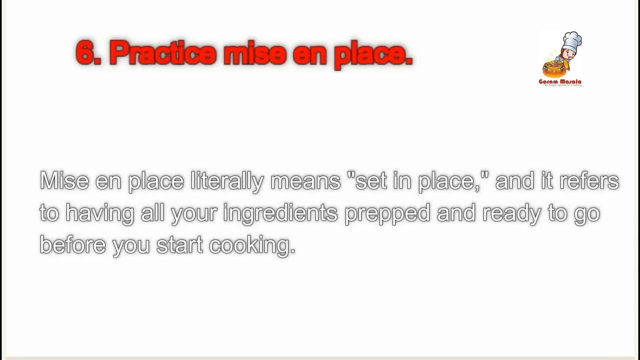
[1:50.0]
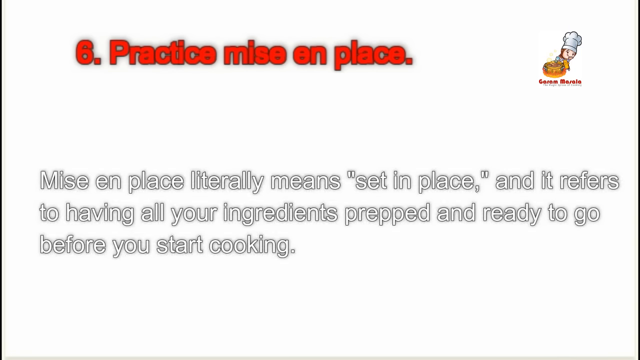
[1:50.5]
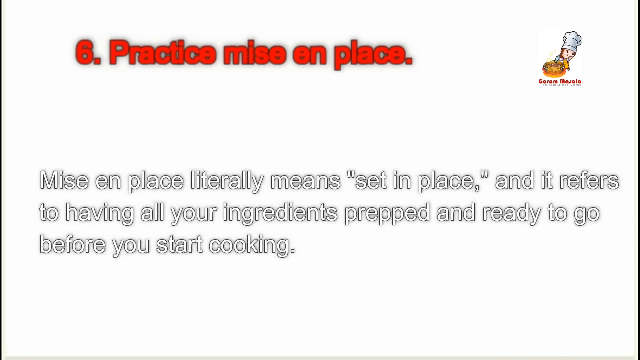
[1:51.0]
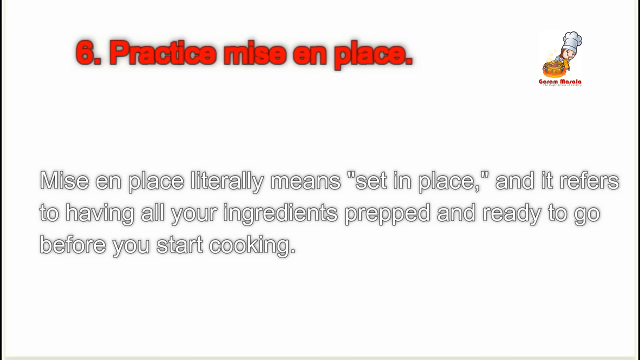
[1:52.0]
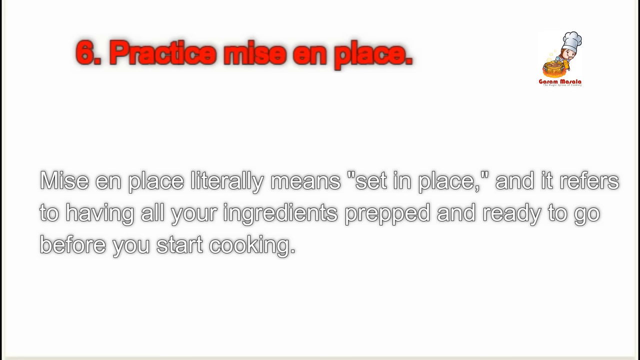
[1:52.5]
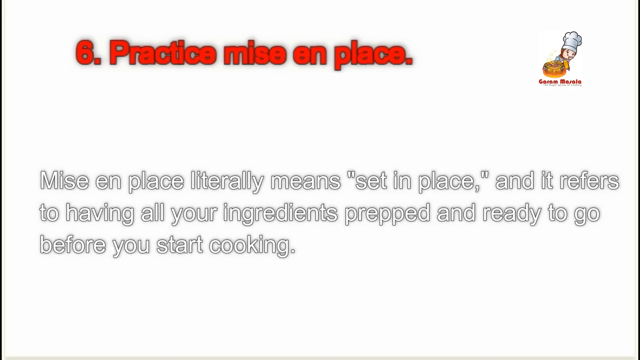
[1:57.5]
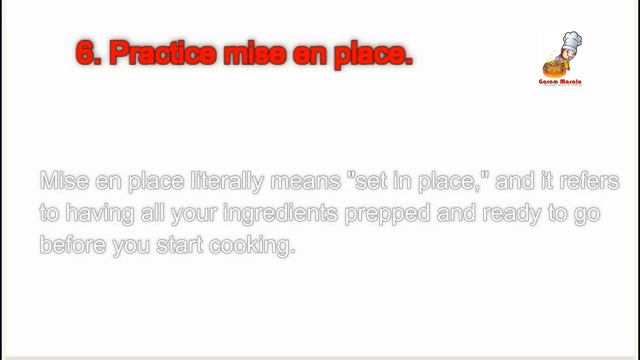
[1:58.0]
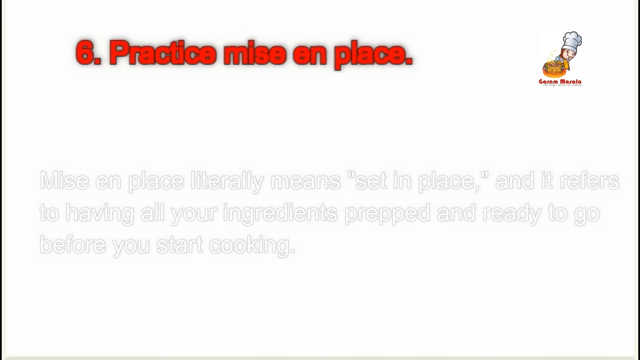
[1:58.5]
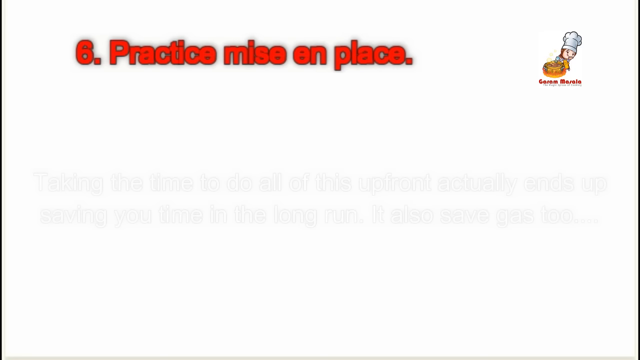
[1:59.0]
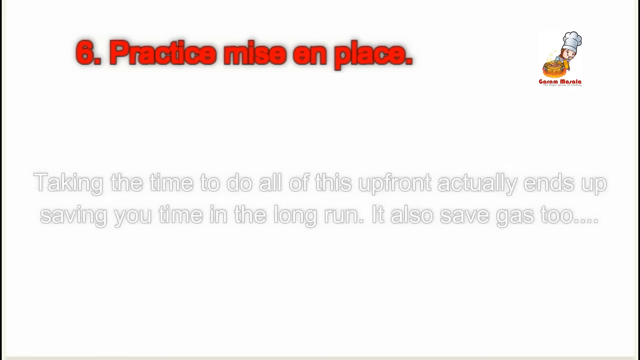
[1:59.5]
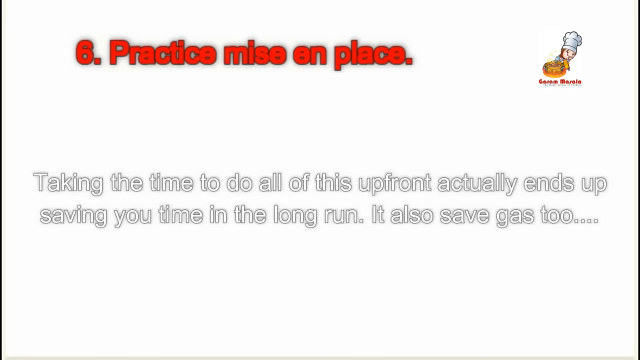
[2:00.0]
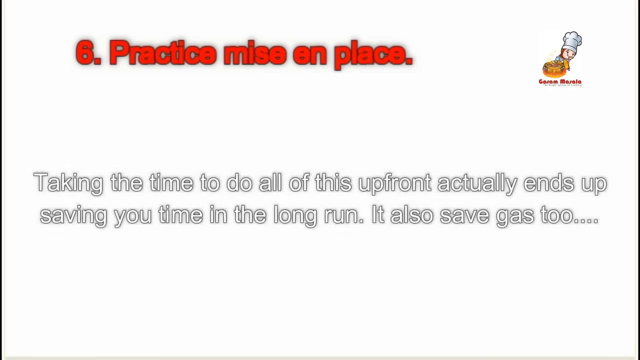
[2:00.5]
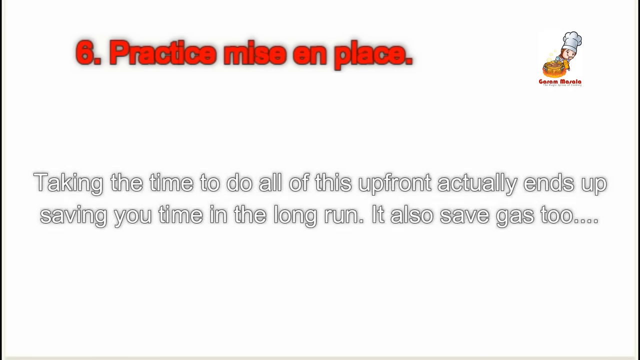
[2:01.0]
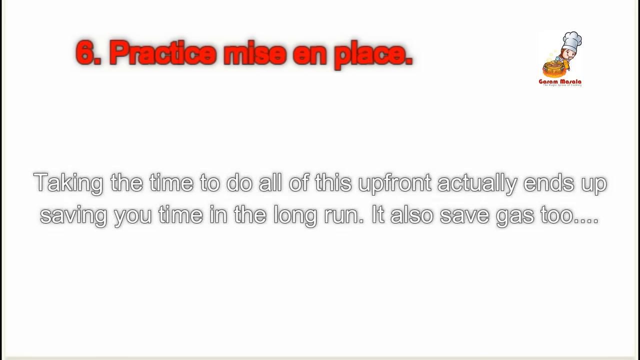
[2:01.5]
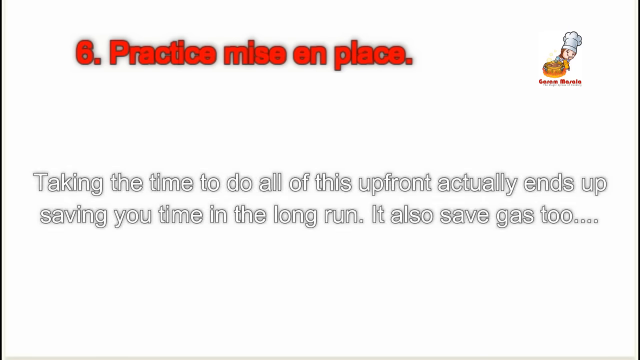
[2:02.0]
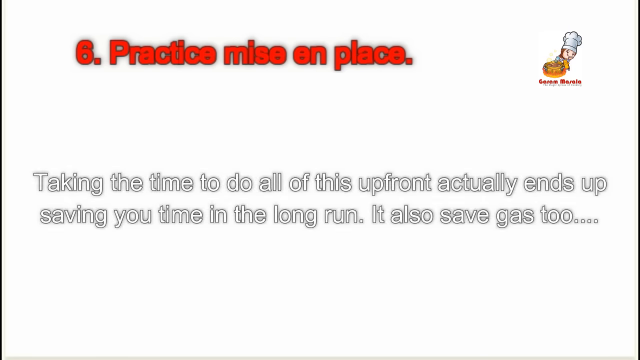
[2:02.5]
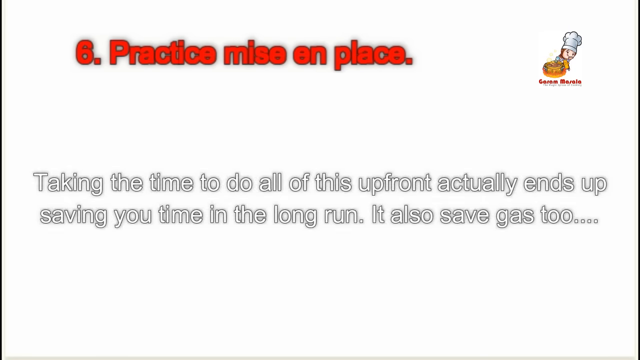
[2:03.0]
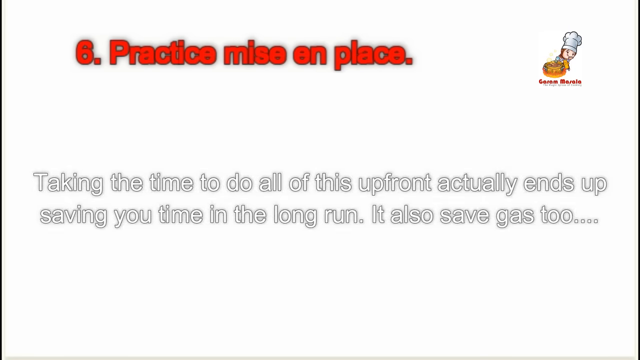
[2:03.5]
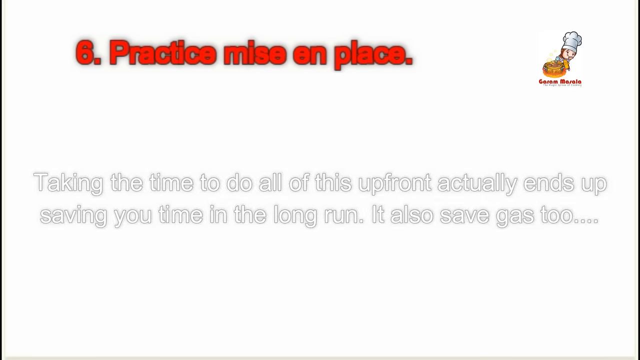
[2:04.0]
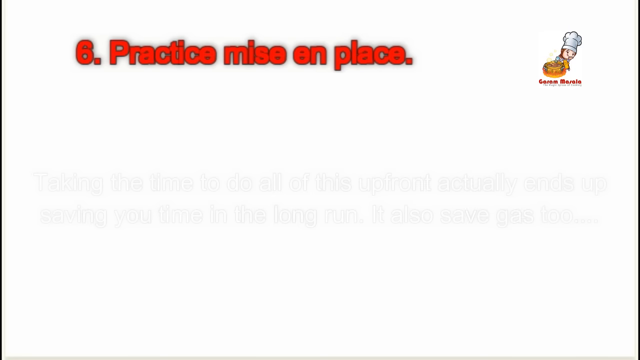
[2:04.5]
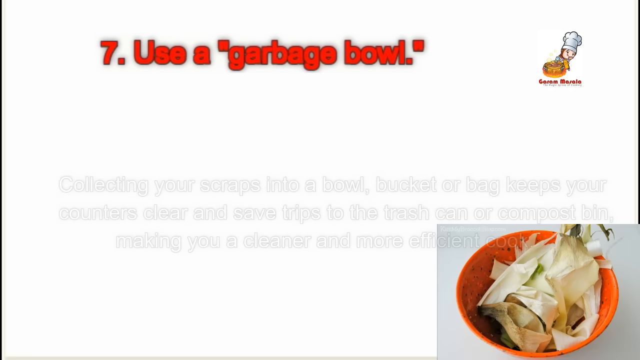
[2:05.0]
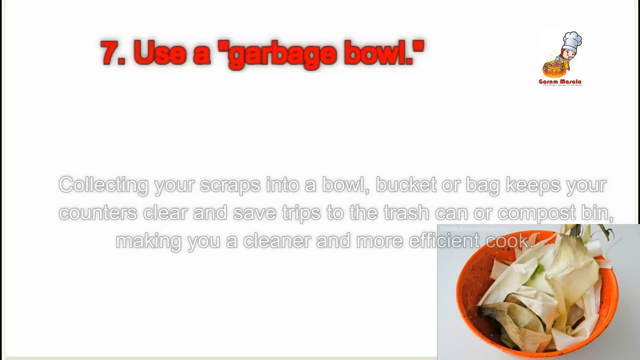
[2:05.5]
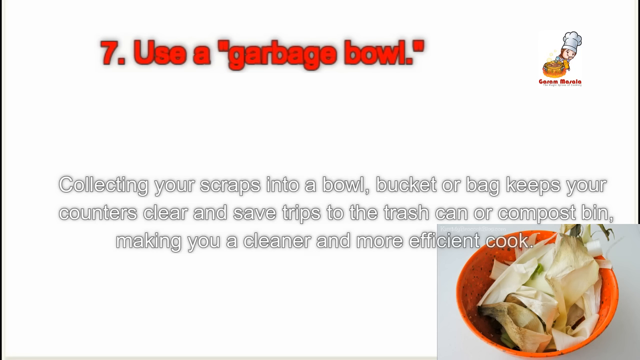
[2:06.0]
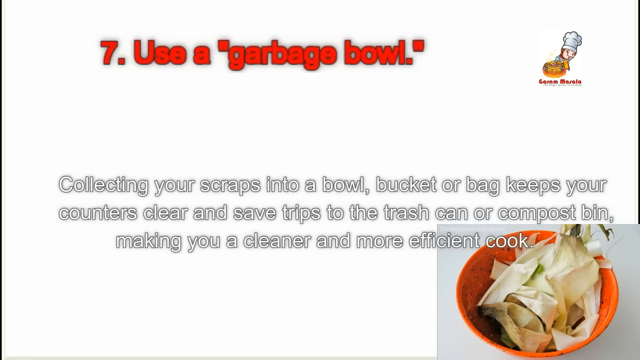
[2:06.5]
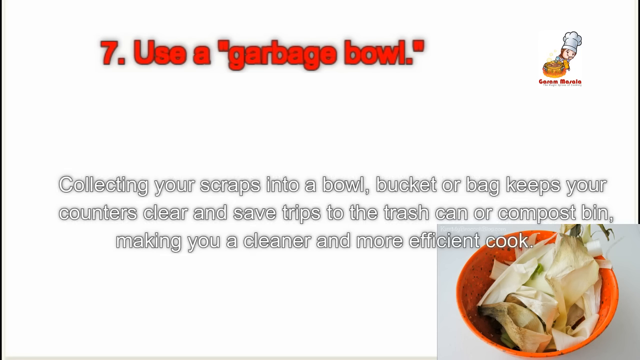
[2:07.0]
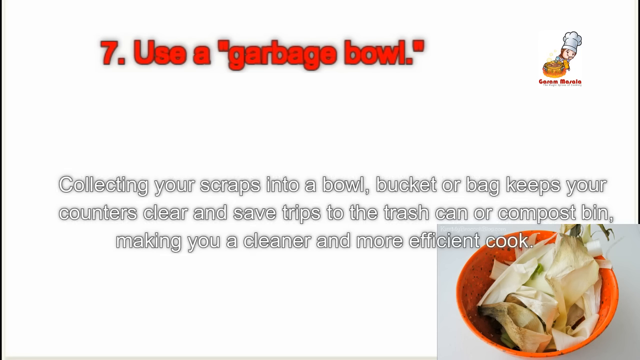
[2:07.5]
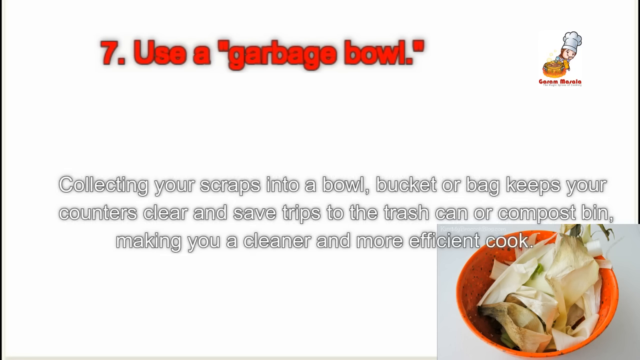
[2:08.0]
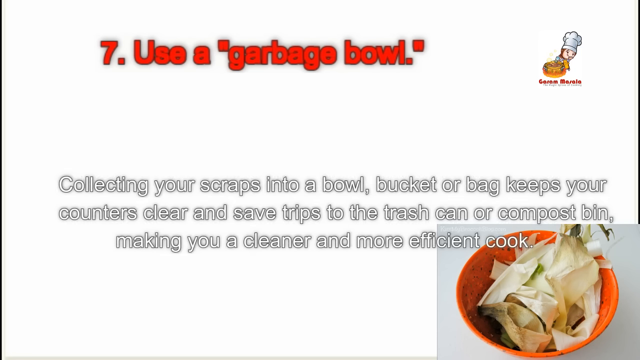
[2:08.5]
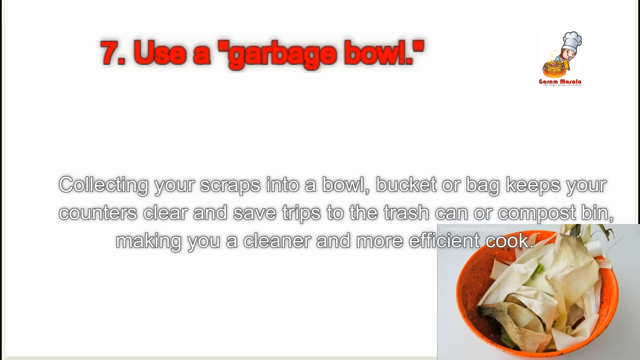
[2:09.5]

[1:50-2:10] A slide shows red text reading "number six, practice mise en place." In the top right corner is a cartoon character with a white chef's hat and a dish in front of them, with red text underneath. In the middle of the slide, white text with a gray border reads "mise en place literally means set in place and it refers to having all your ingredients prepped and ready to go before you start cooking." The background is white. The white text then changes to "taking the time to do all of this up front actually ends up saving you time in the long run. It also saves gas too." The video cuts to another slide with the number 7 in red text and "use a garbage bowl," with white text underneath reading "collecting your scraps into a bowl, bucket, or a bag keeps your counters clear and saves trips to the trash can or compost bin, making you a cleaner and more efficient cook." In the lower right corner is an orange garbage bowl with trash inside it.